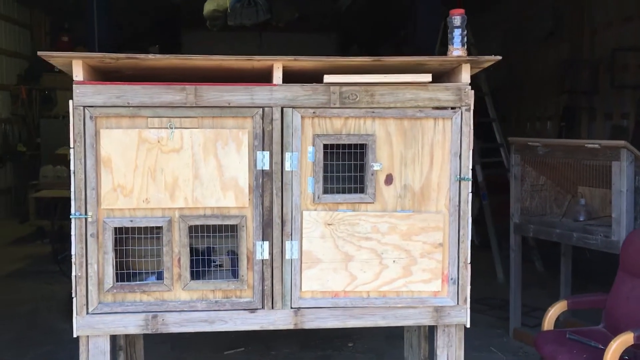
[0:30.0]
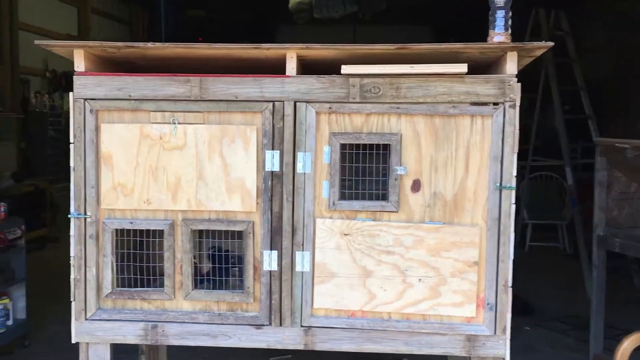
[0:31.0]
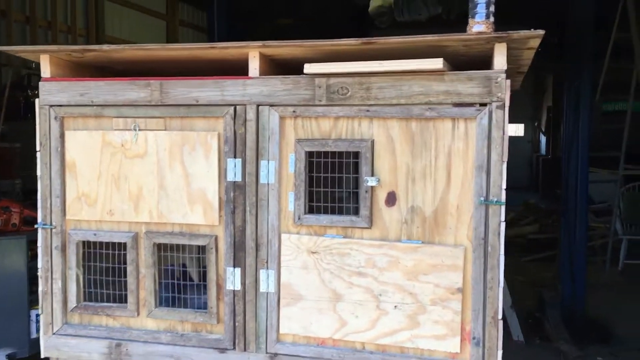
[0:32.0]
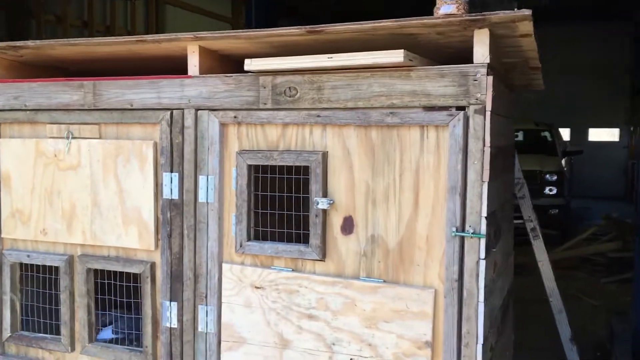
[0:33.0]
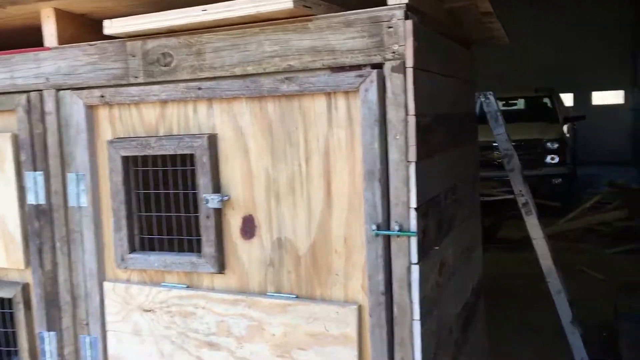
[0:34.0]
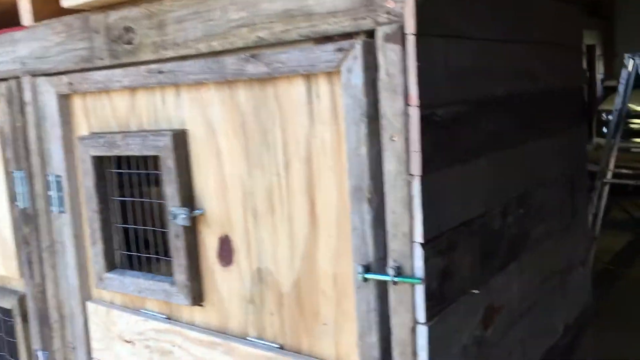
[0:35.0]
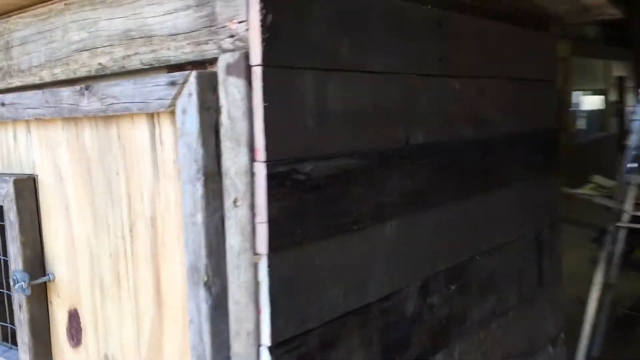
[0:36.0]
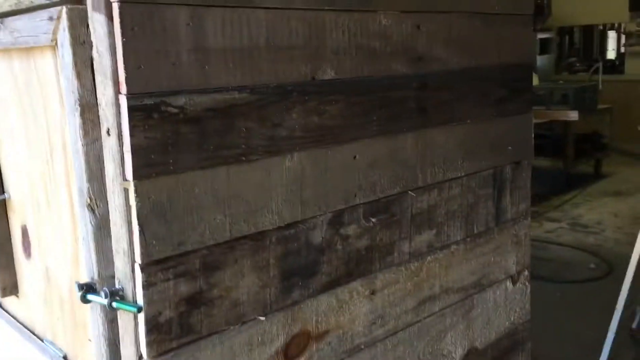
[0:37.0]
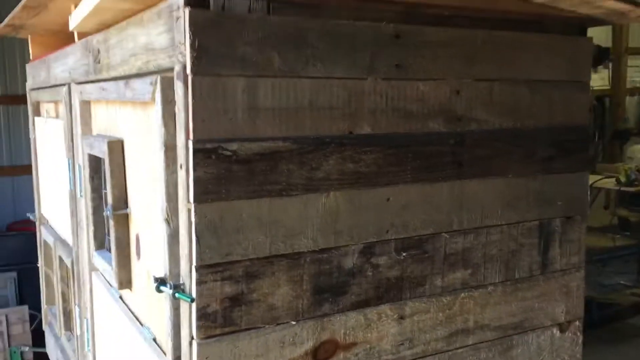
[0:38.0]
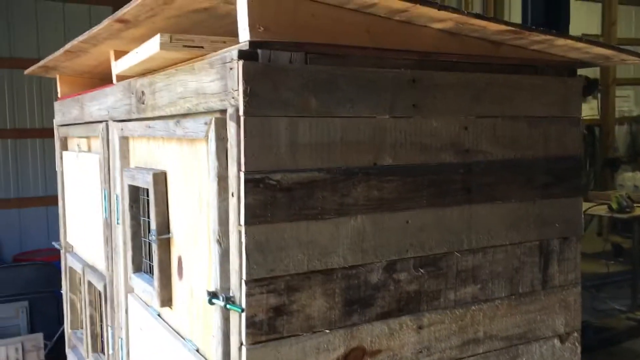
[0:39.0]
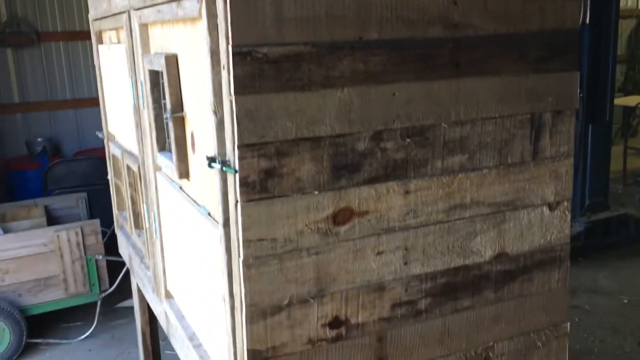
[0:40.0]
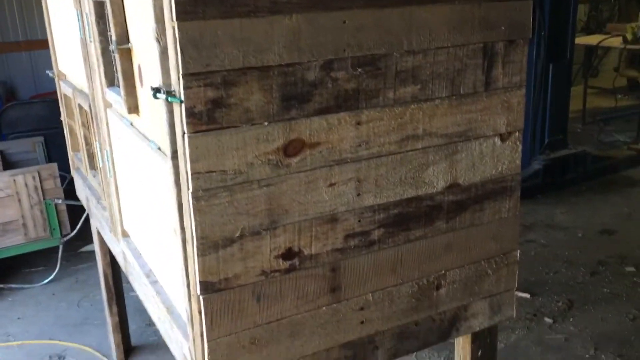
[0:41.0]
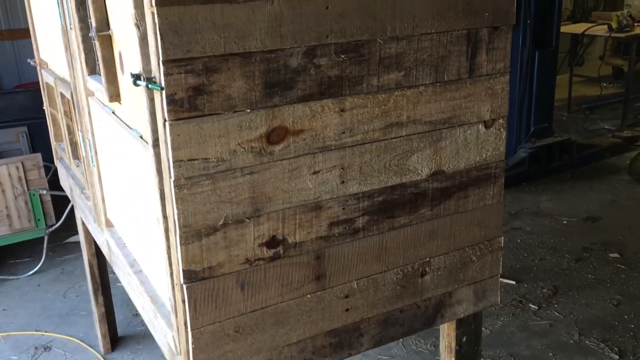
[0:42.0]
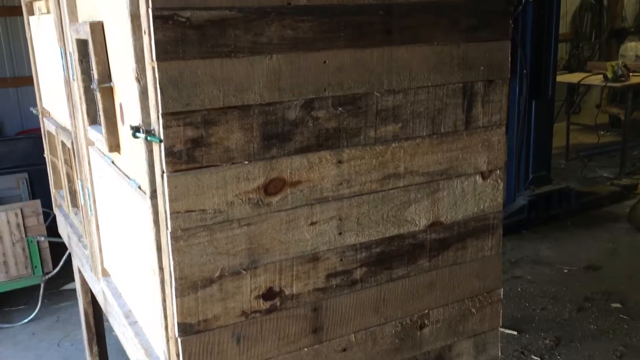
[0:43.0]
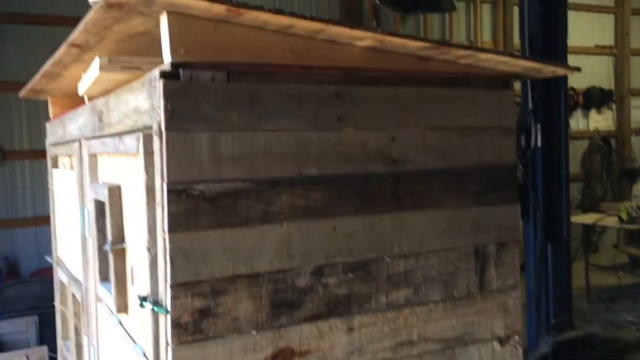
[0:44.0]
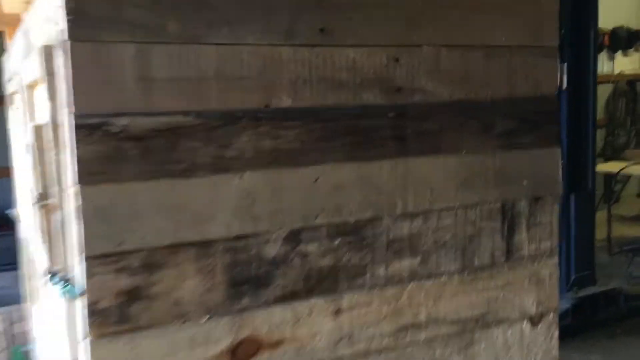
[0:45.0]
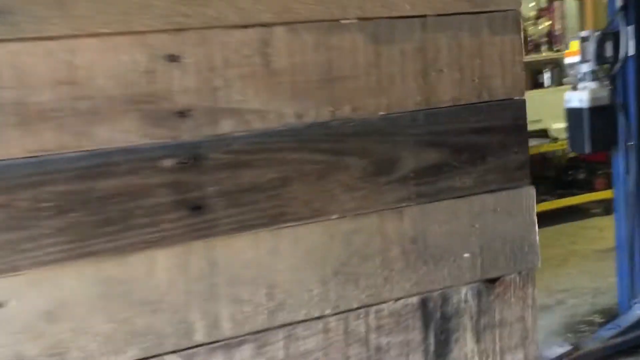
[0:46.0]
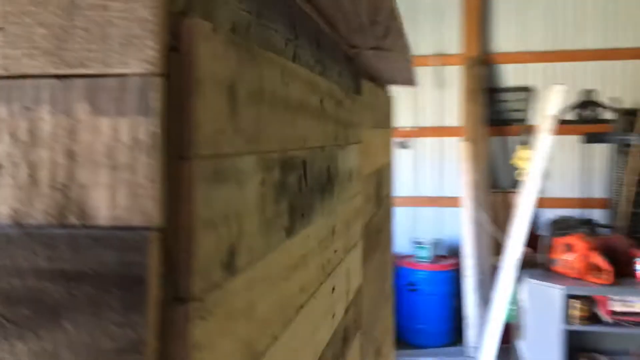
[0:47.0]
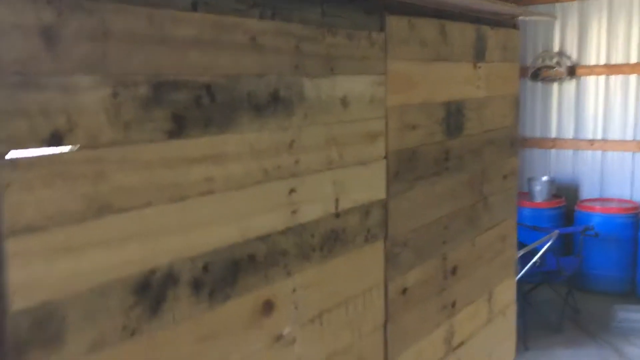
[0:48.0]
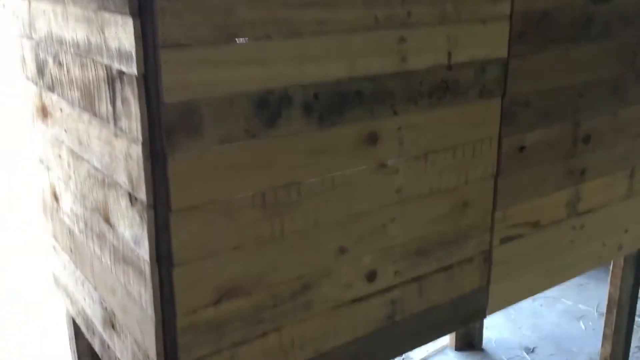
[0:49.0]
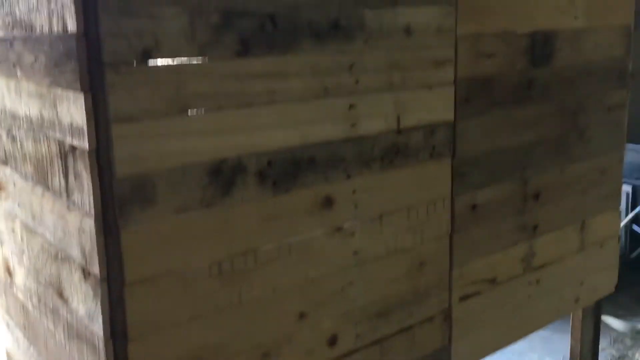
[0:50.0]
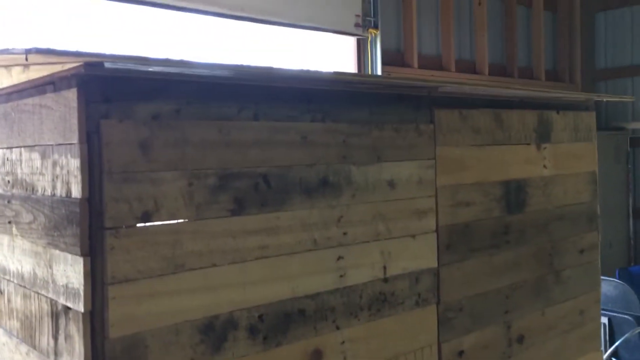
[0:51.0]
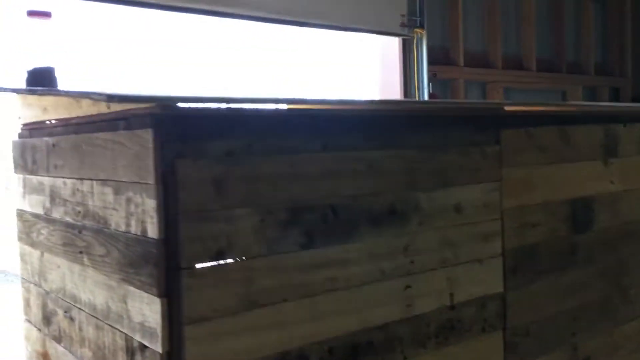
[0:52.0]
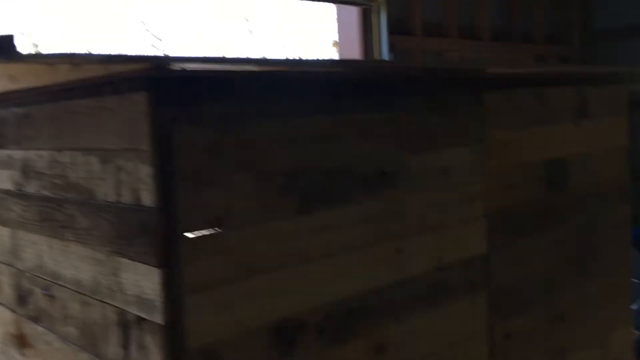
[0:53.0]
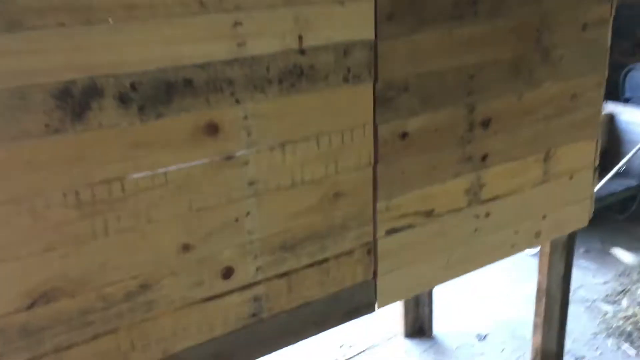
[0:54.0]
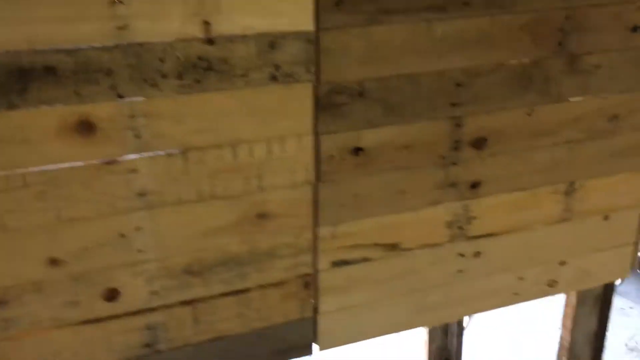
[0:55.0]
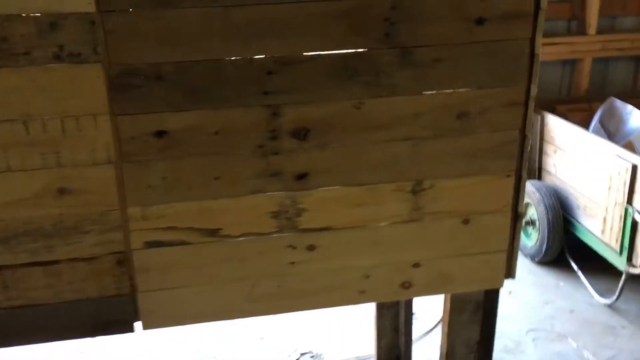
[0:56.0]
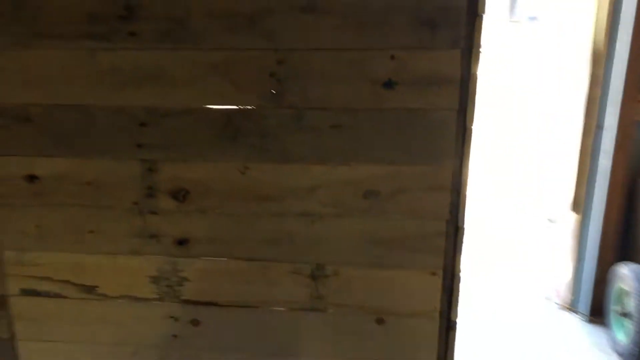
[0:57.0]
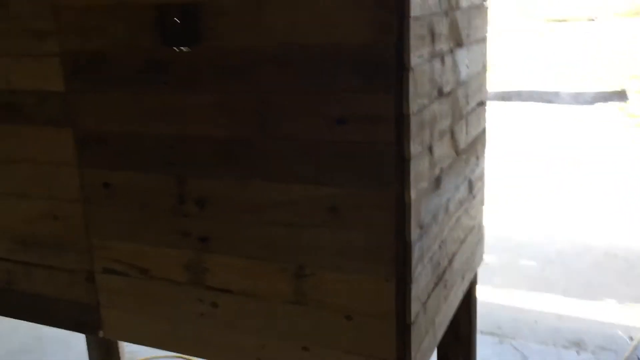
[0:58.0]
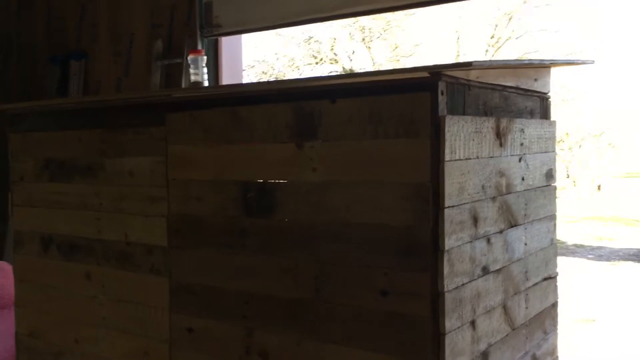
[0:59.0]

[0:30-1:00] The camera moves closer to the coop toward its right side, showing the detail of the wood it is made of; the sides are a darker wood than the front. The camera then goes toward the back, which is made of the same wood as the sides. The coop looks like it might be about eight feet tall and has four legs. The camera continues around to the other side of the coop, completing a walk around it.